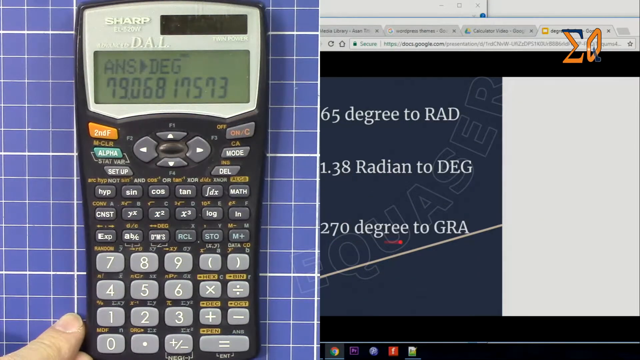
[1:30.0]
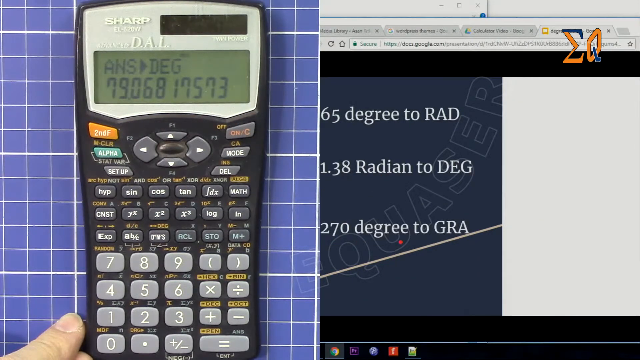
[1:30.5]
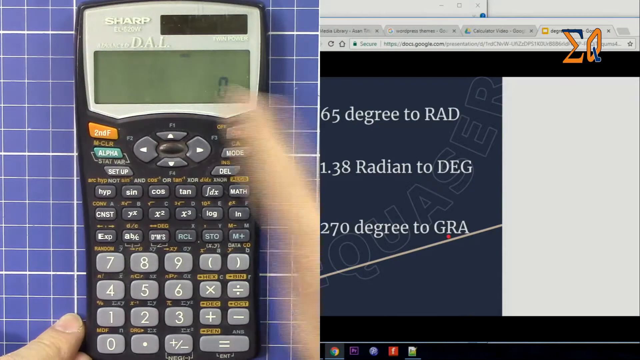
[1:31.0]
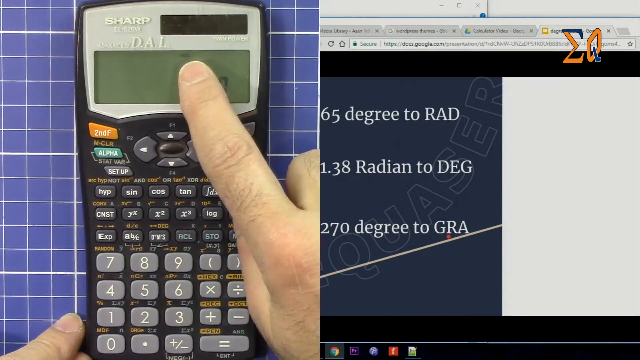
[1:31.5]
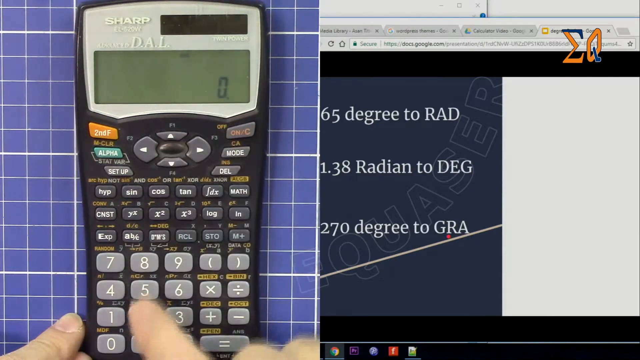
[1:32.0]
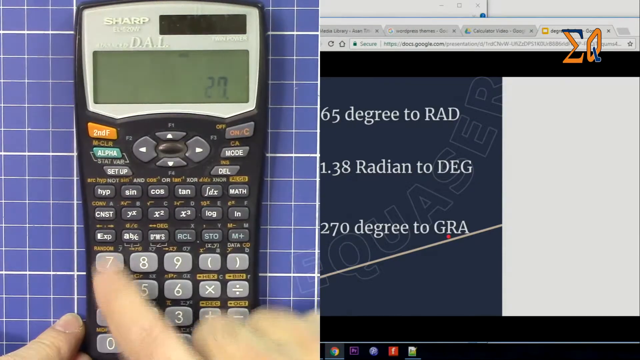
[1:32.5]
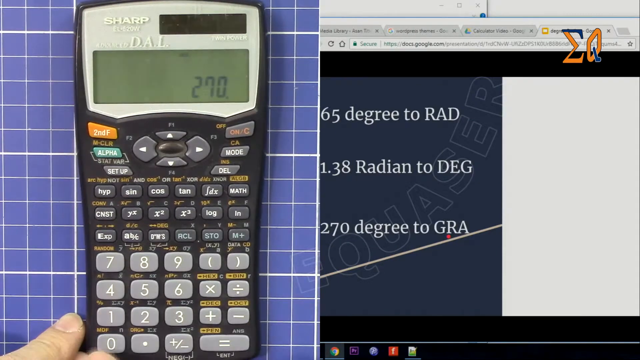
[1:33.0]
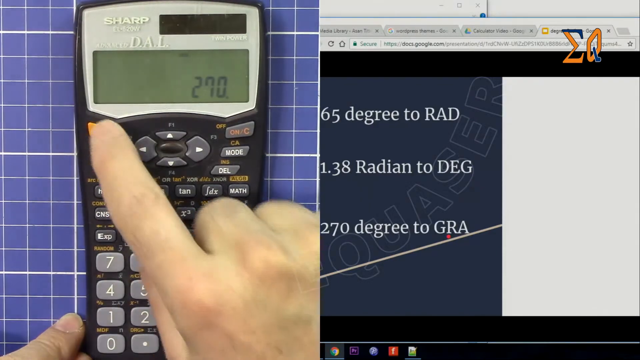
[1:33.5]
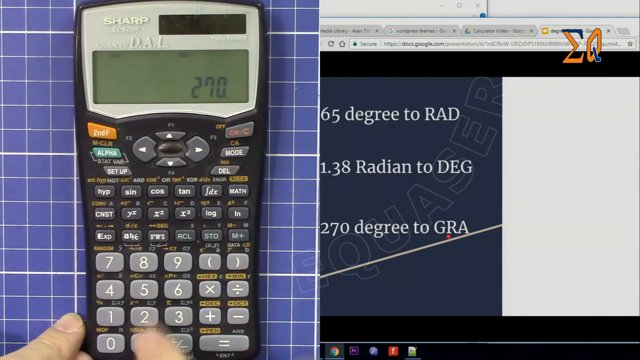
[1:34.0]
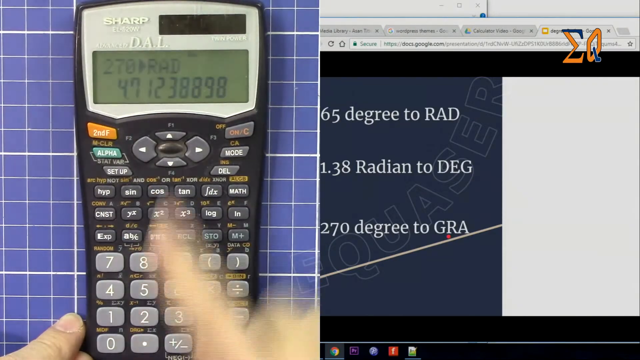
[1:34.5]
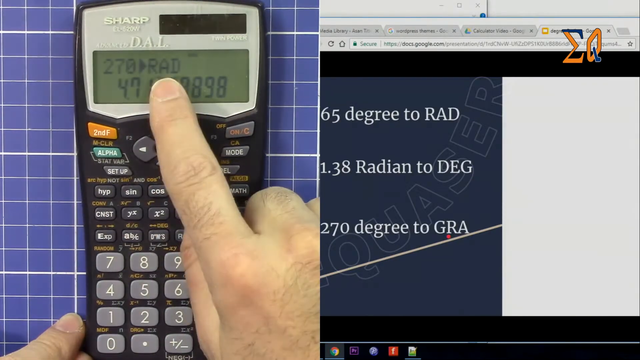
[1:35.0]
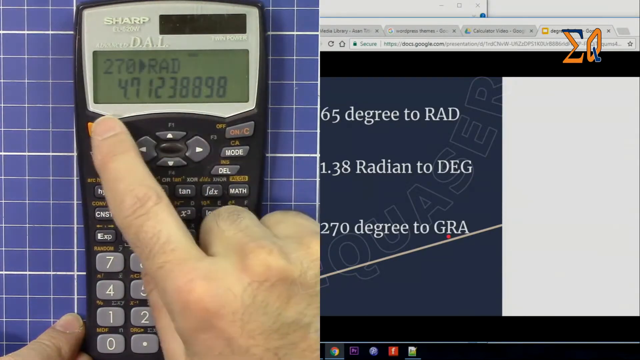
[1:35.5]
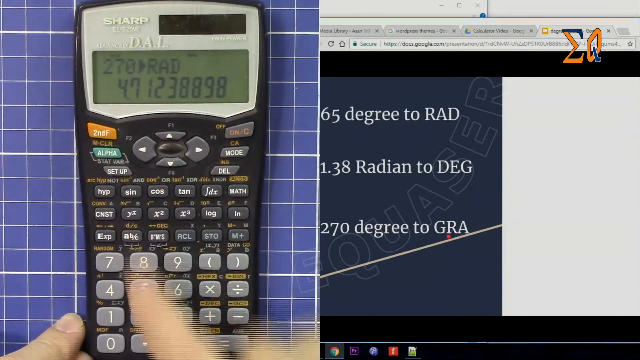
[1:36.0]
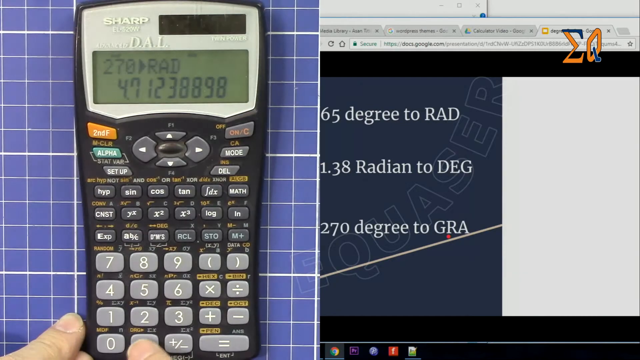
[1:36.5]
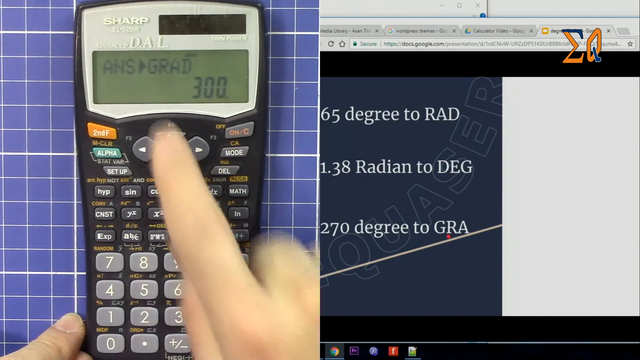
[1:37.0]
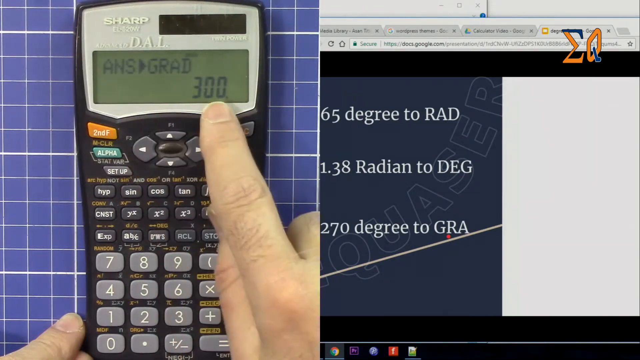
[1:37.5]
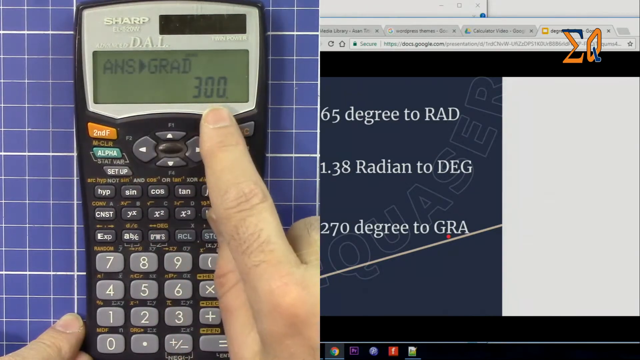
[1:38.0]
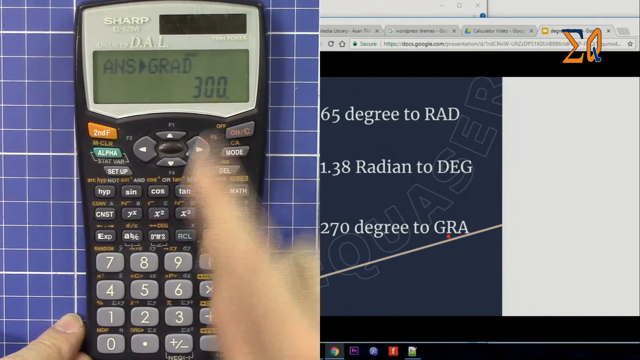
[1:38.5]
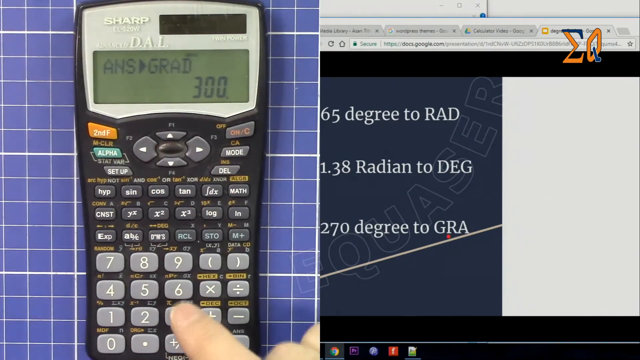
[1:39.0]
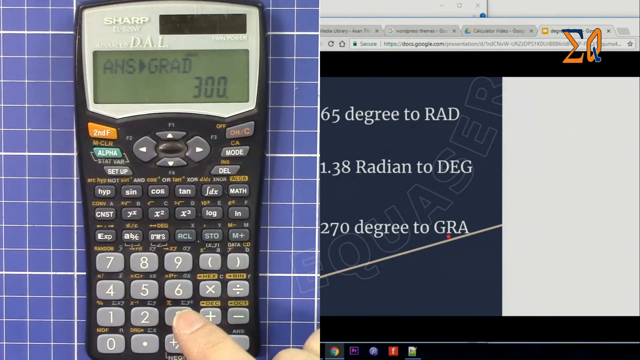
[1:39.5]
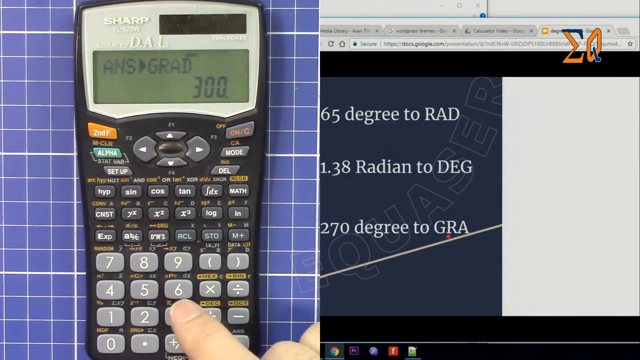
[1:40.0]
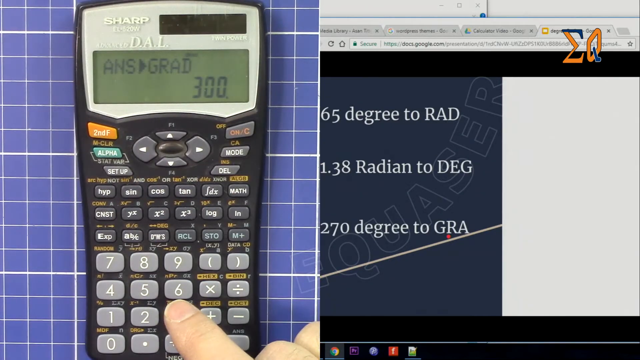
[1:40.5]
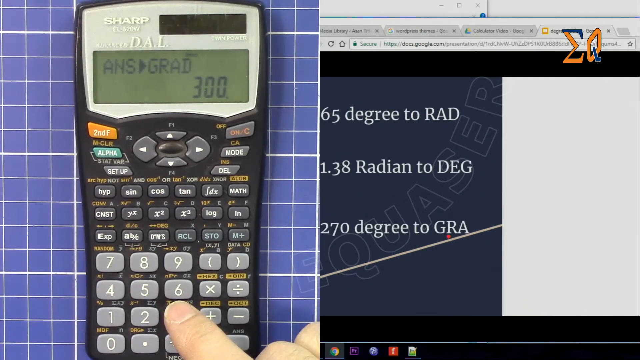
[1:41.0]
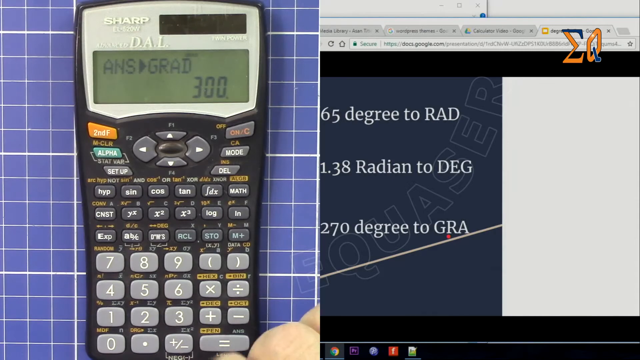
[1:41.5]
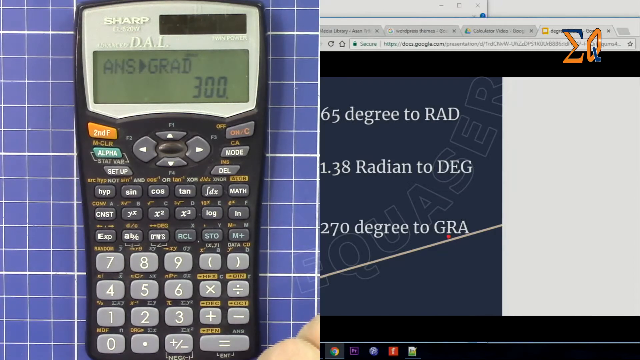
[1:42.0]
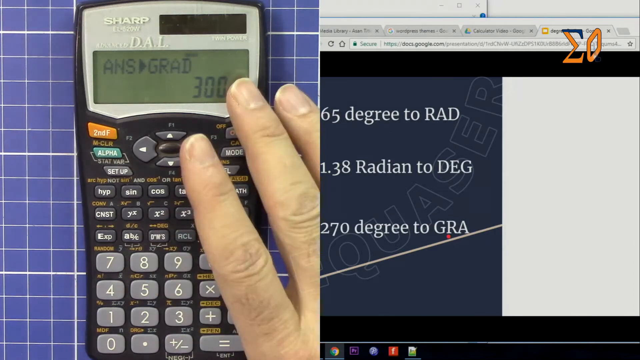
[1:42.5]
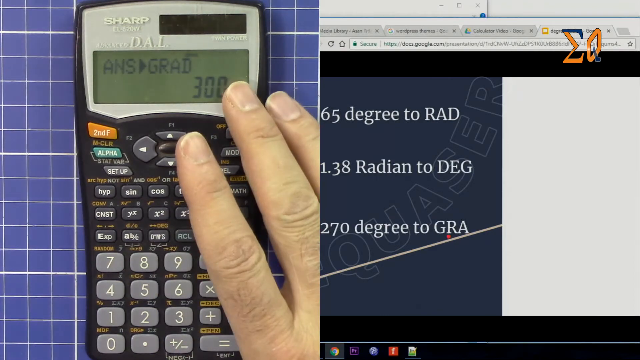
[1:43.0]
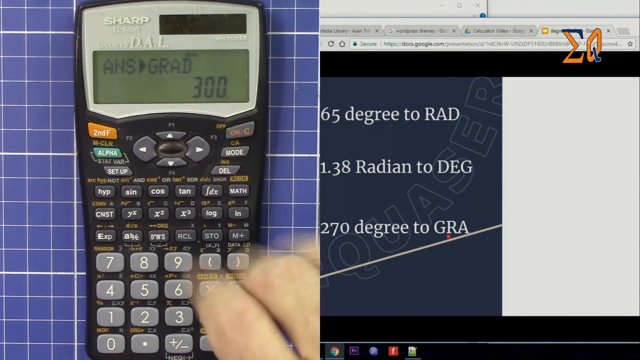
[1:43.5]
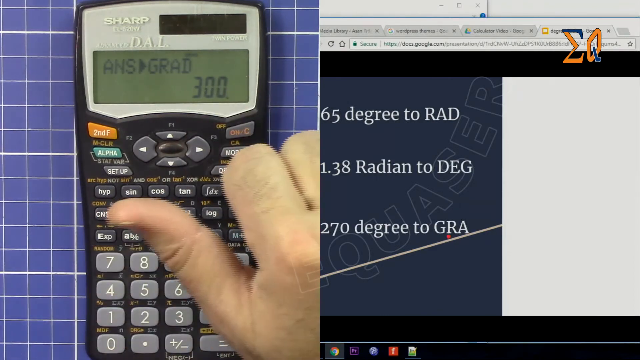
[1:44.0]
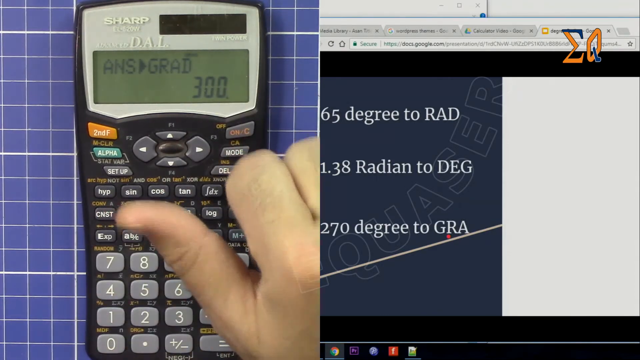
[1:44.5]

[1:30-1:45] The calculator screen is cleared again. The pointer finger of the right hand, coming in from the right side, points to the small text at the top, which cannot be made out. It goes down, types in 270, and hits the orange button, which shows "270" with the arrow to "rad", with the numbers "471238898" underneath. The hand moves down to the left to the top orange button again and taps it, which changes the screen: the top part says "ANS" with the arrow pointing to "grad", and below that on the right side it says "300". The finger comes up and points at it again, goes down toward the bottom, hovering above the numbers, then goes up to the top right side.